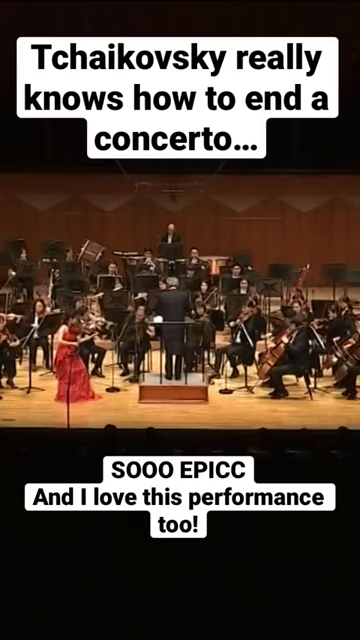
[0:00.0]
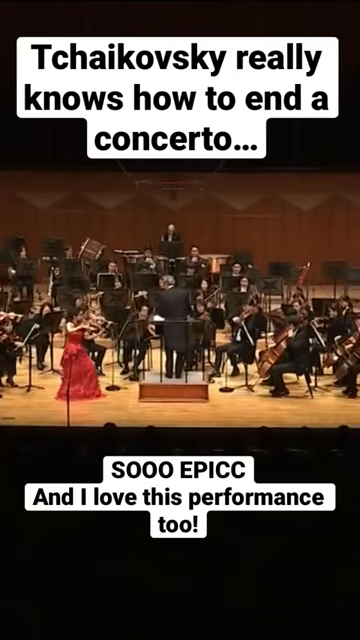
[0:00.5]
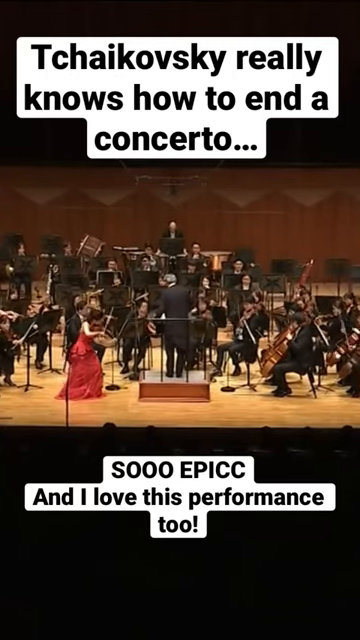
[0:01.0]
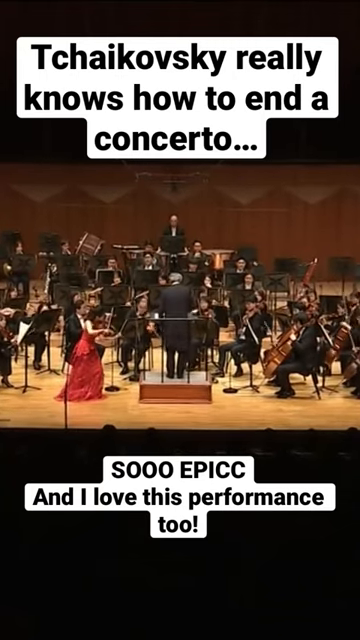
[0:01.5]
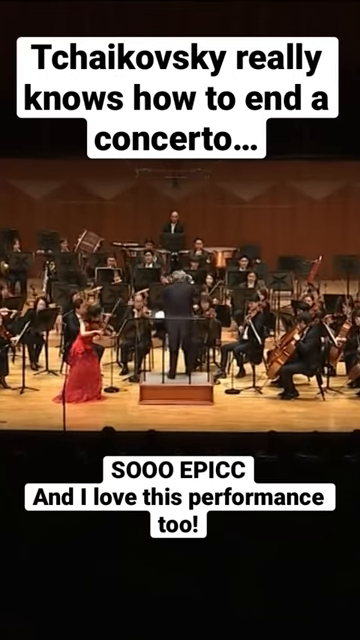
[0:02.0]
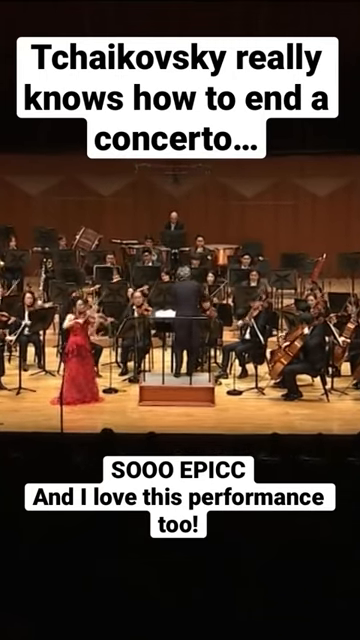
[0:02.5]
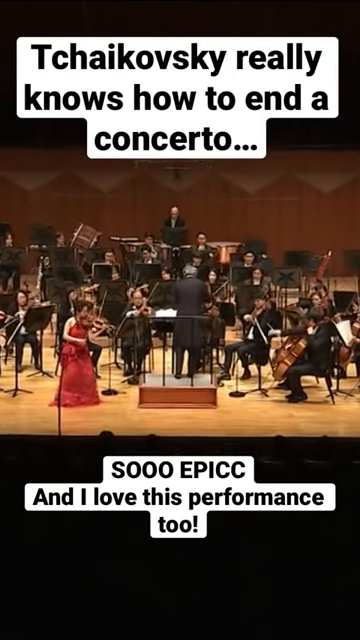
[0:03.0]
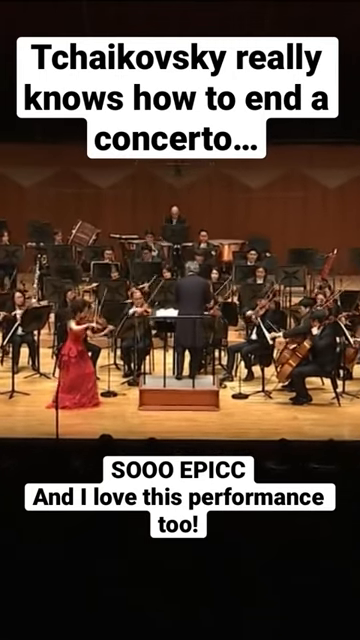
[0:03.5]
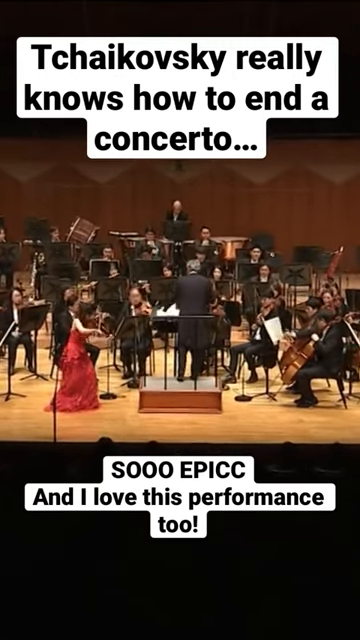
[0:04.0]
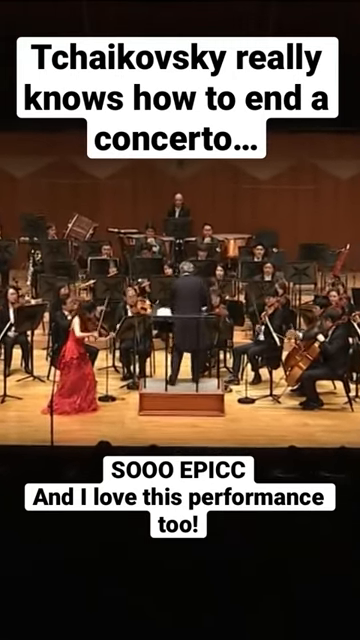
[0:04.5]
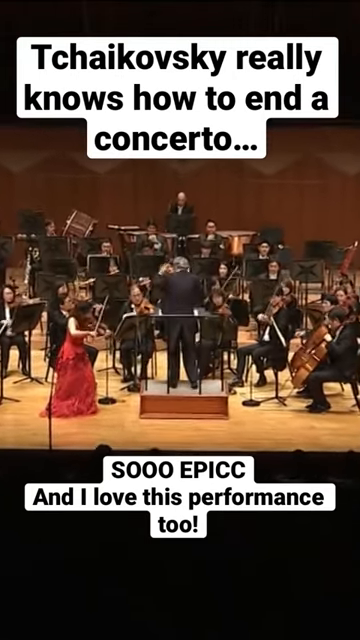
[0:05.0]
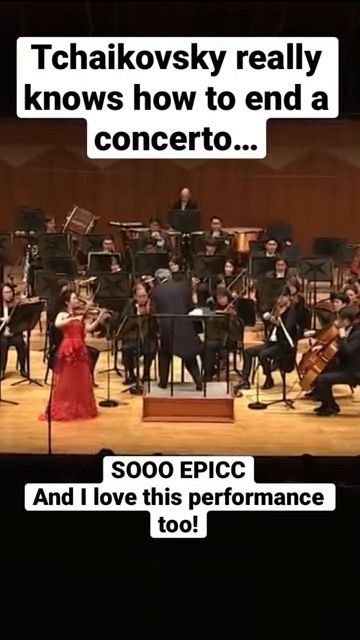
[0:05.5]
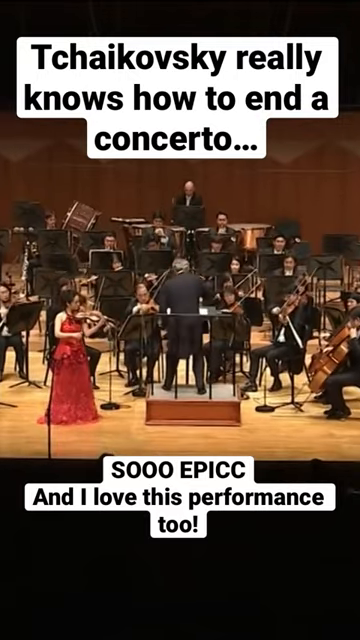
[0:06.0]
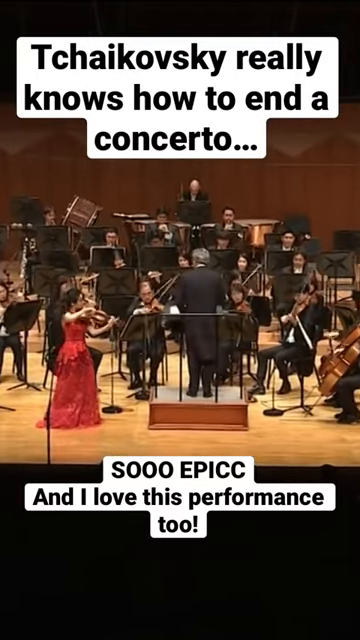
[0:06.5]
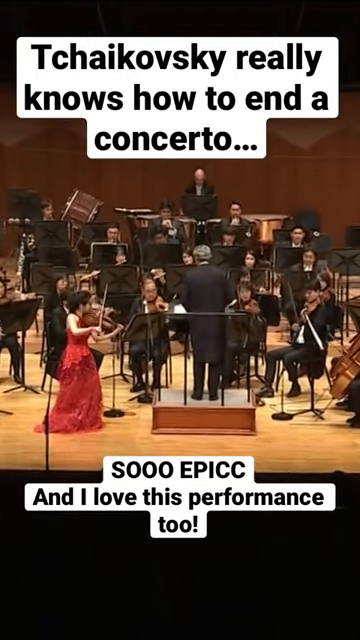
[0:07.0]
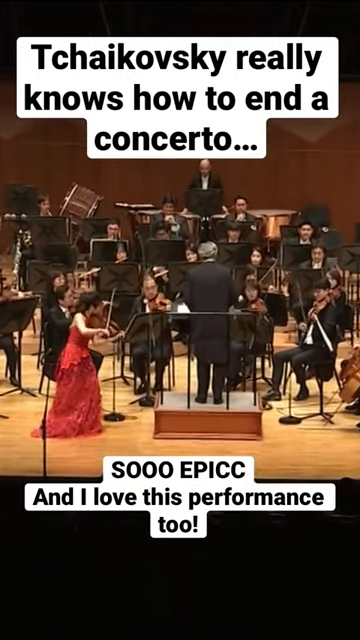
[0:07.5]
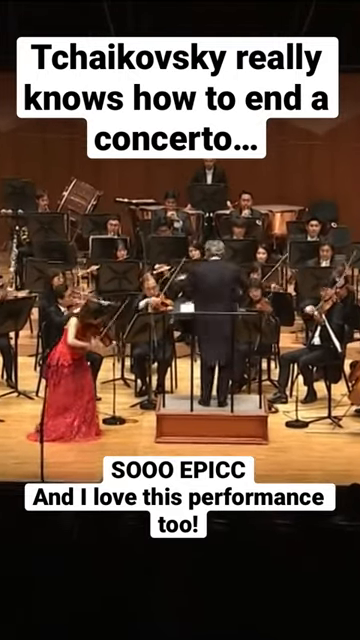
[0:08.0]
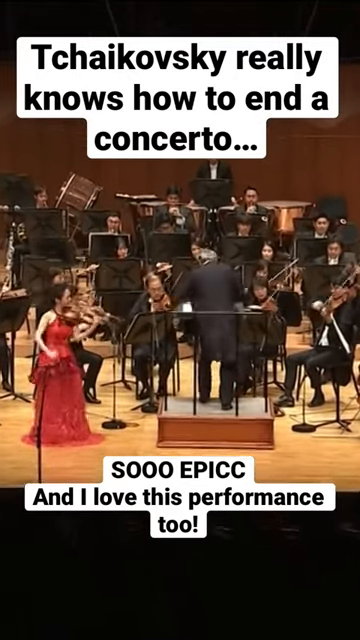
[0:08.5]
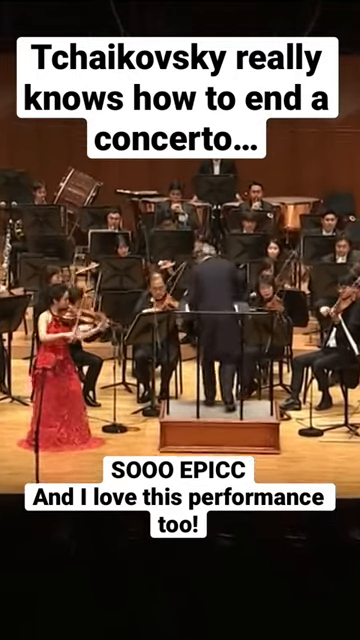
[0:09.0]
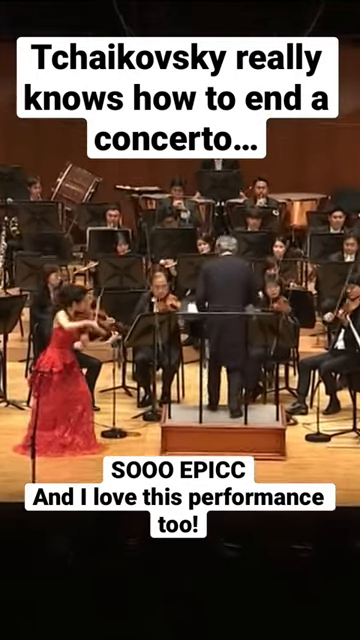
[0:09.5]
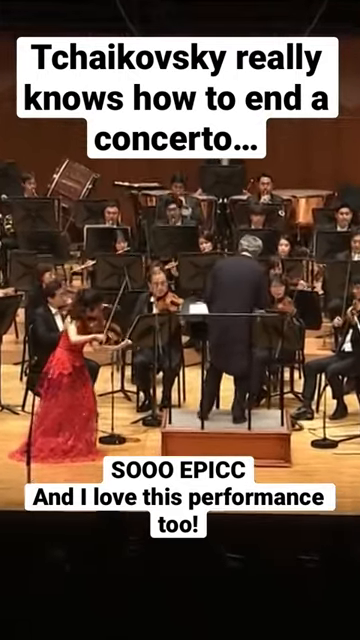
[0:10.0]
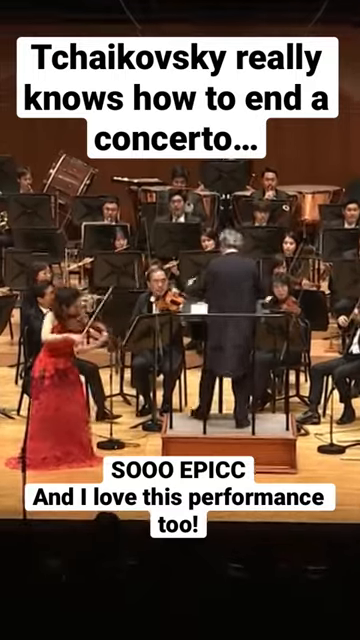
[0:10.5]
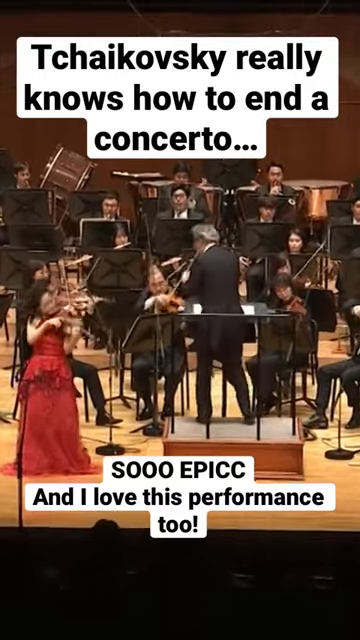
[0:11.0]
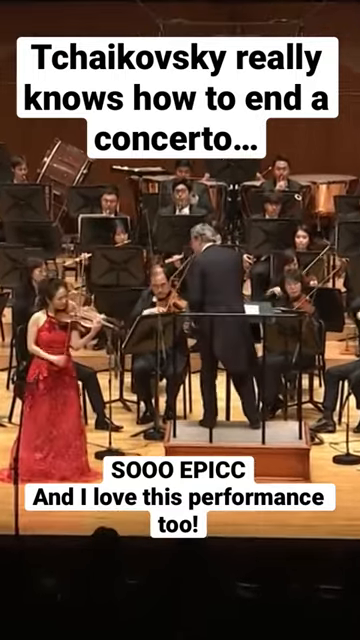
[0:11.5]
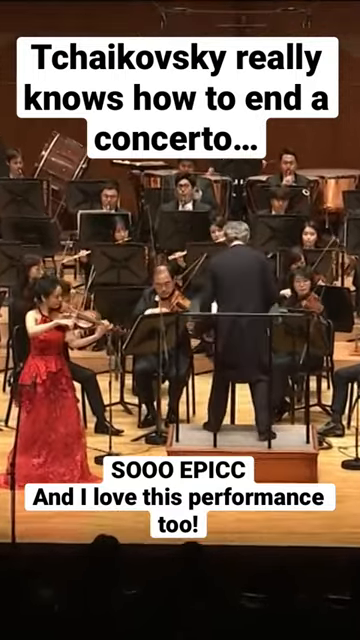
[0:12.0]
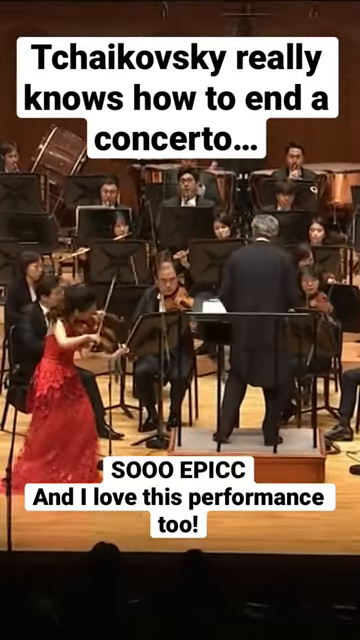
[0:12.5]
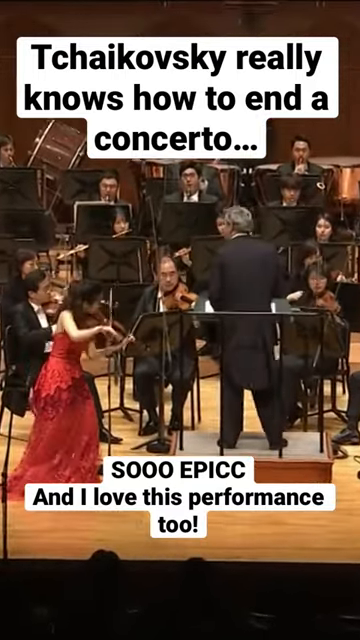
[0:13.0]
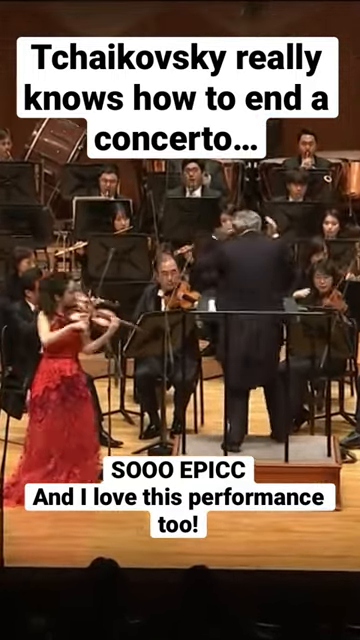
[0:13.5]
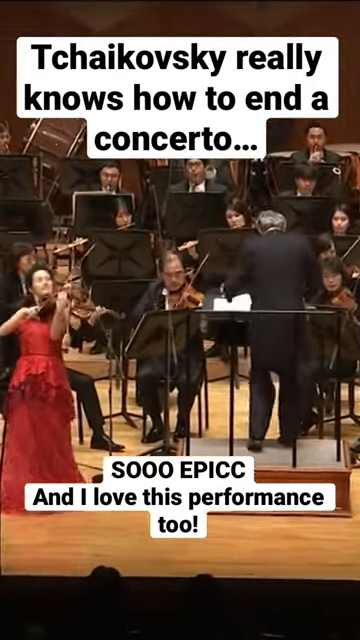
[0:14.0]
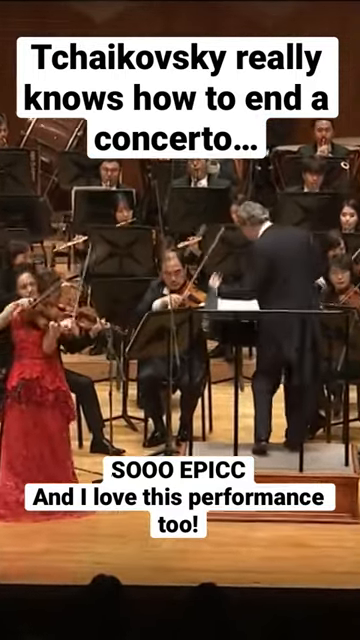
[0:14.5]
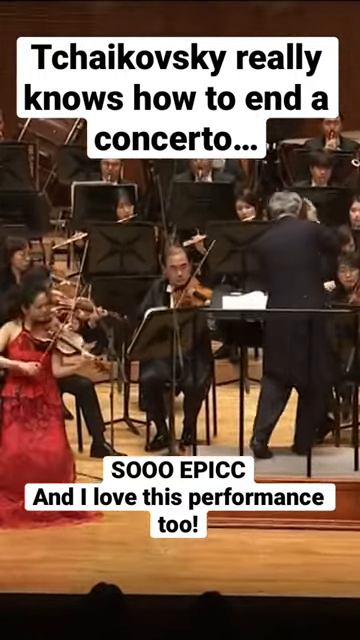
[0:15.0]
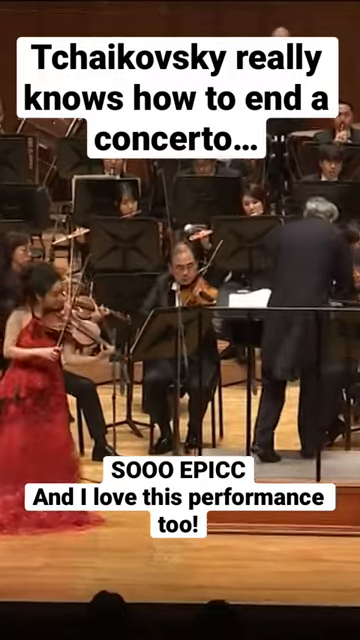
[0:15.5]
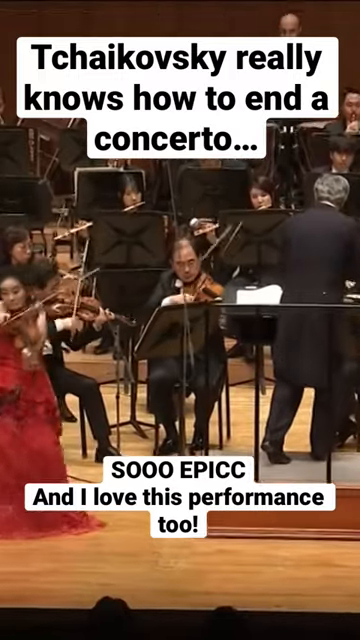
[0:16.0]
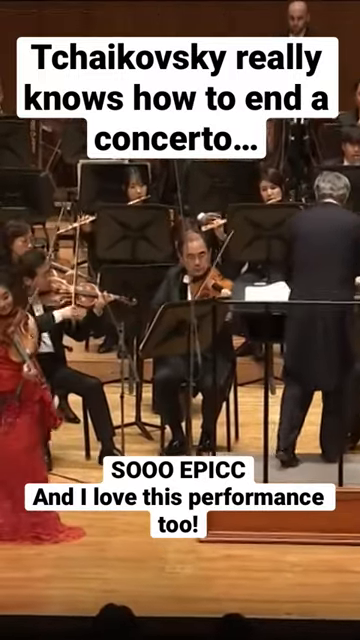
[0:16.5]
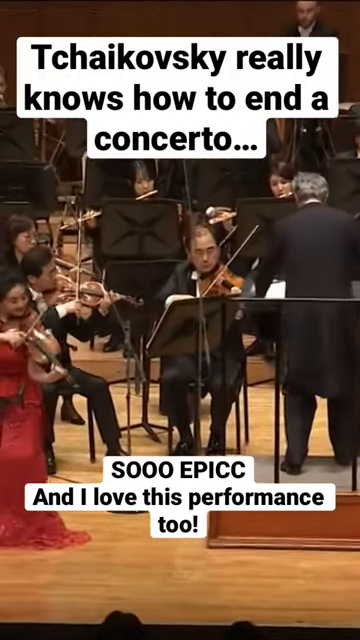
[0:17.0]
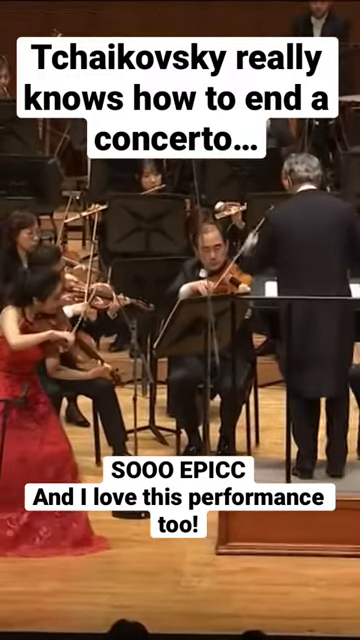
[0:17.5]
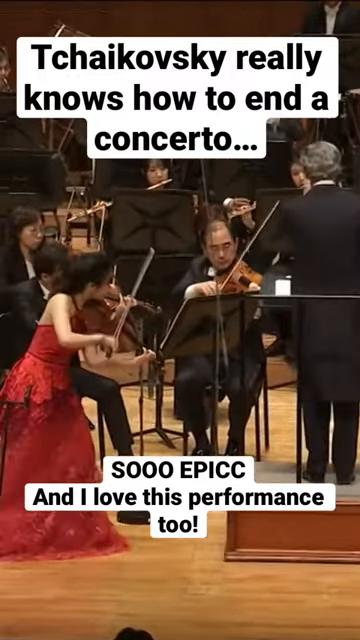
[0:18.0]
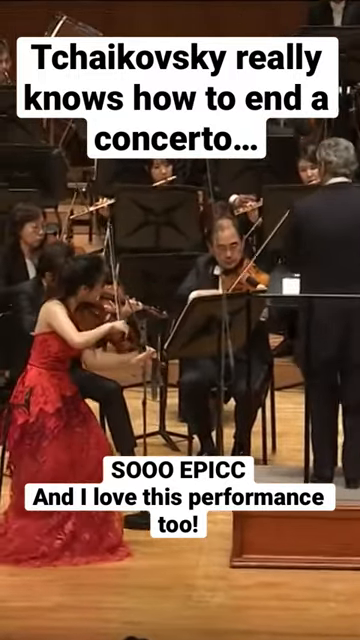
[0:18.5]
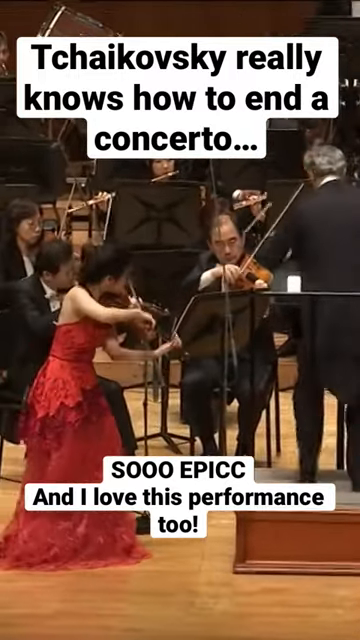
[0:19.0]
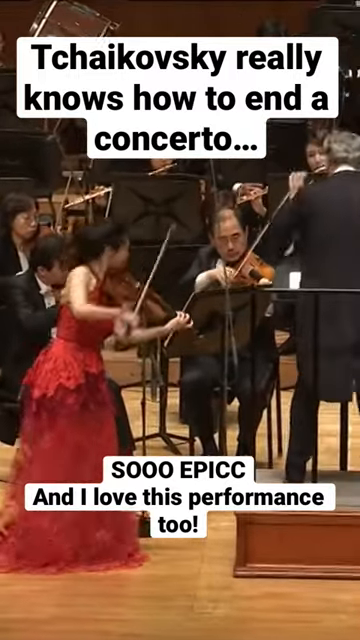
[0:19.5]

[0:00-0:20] An orchestra concert is underway, with a close-up of the players playing their instruments extremely fast; what looks like a small woman in a red dress plays a violin furiously. The playing is so fast that the video may be sped up, possibly at double speed. Only the middle third of the screen shows the video, and the rest is black. English words pop up on screen: "Tchaikovsky really knows how to end a concert though. So epic. I love this performance too."